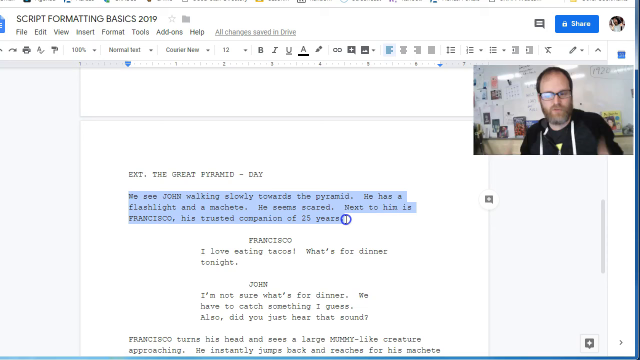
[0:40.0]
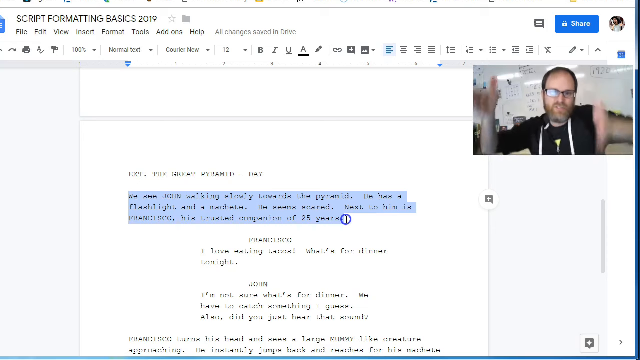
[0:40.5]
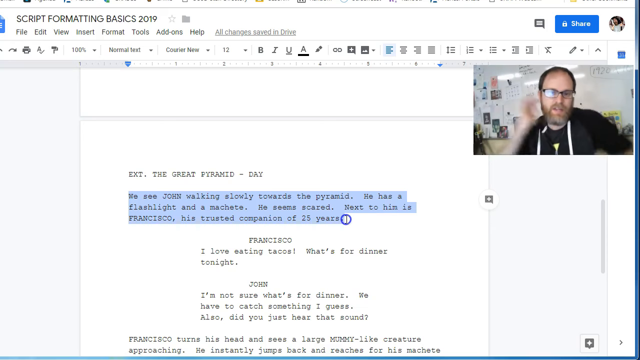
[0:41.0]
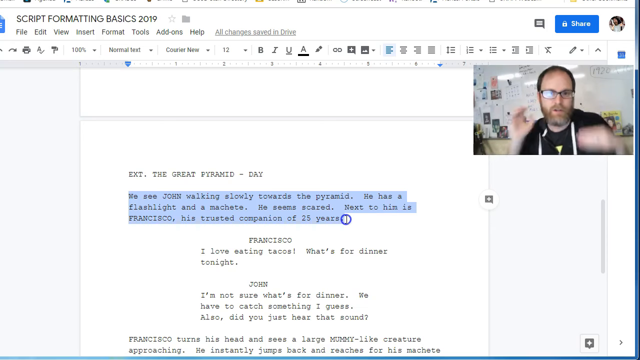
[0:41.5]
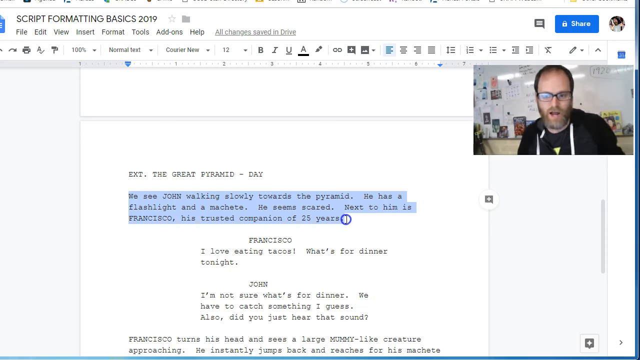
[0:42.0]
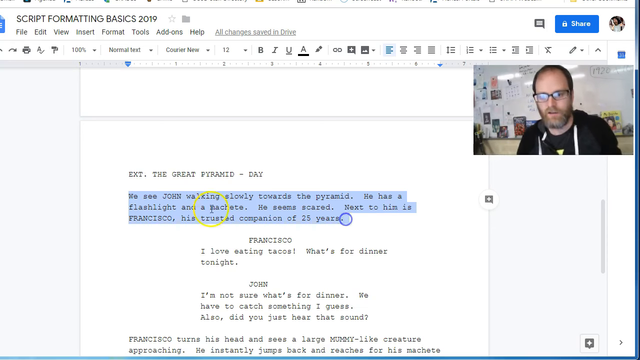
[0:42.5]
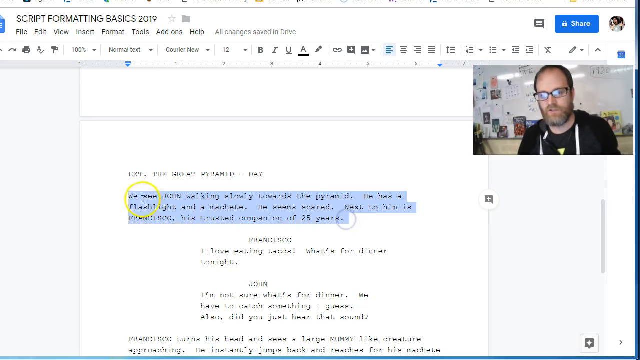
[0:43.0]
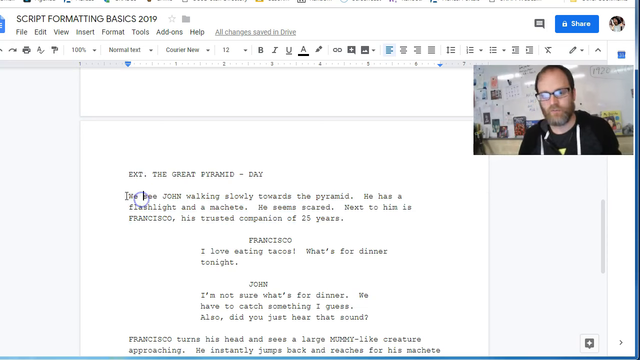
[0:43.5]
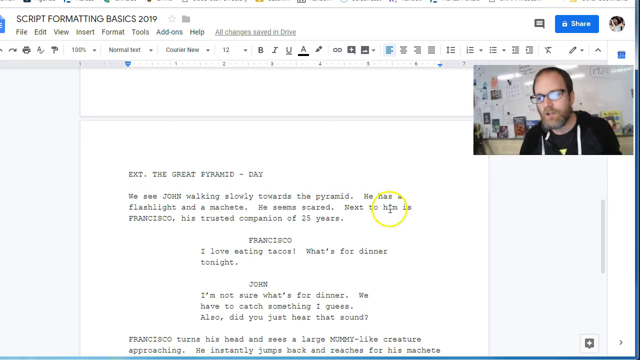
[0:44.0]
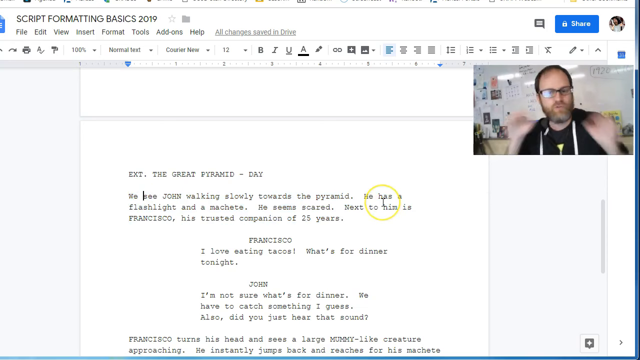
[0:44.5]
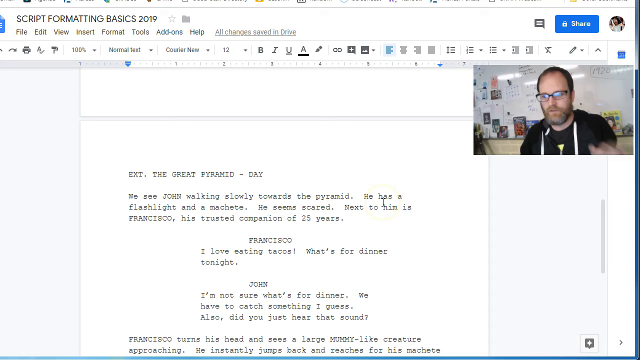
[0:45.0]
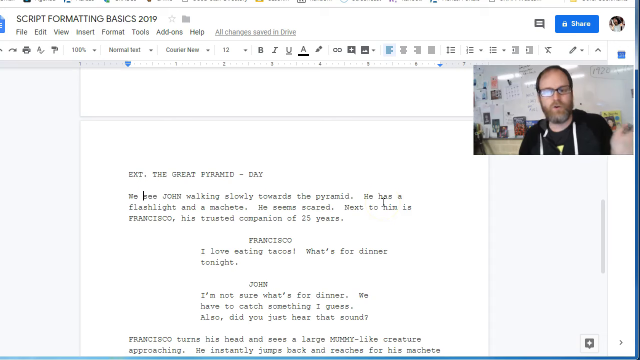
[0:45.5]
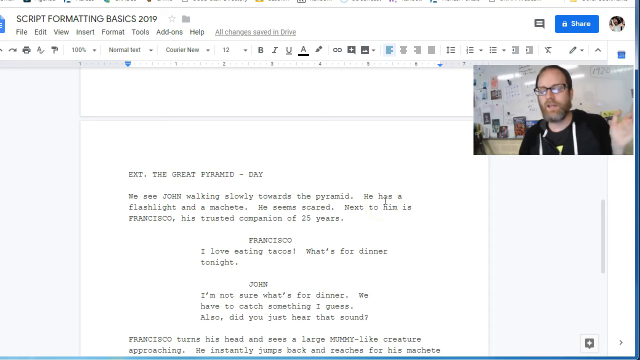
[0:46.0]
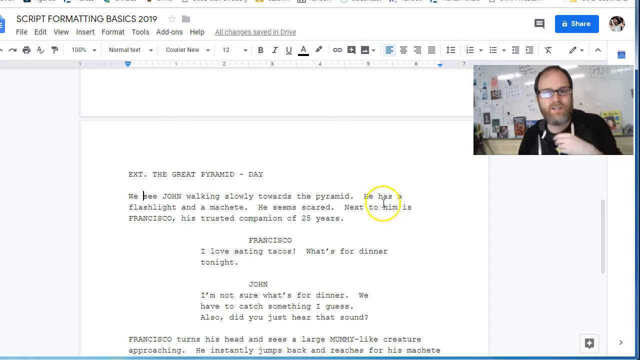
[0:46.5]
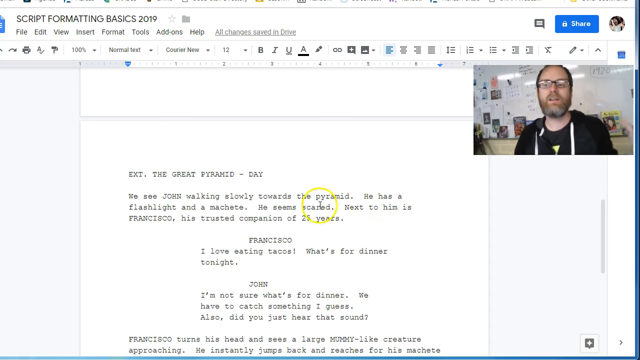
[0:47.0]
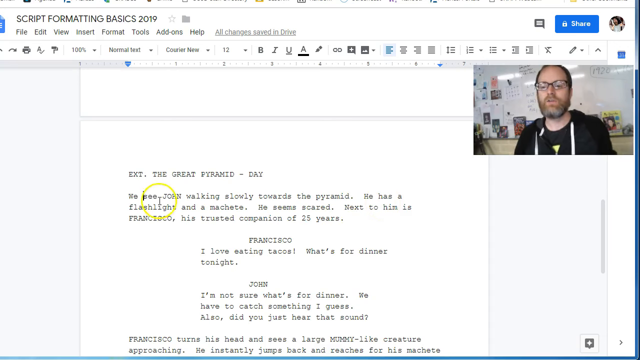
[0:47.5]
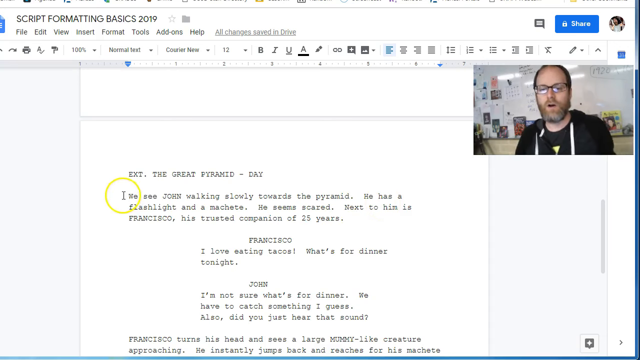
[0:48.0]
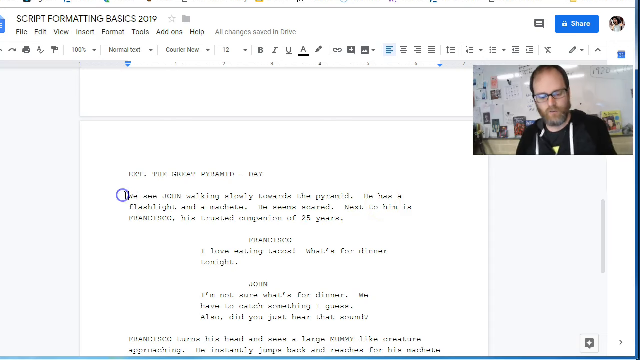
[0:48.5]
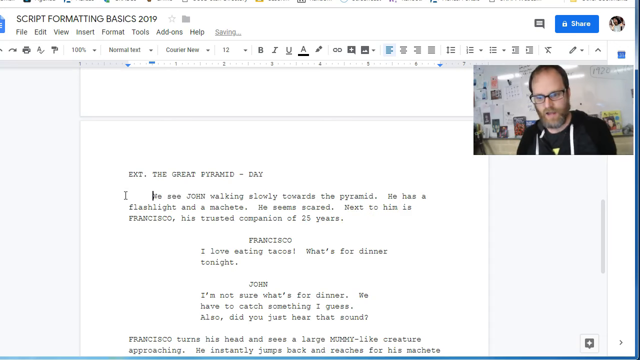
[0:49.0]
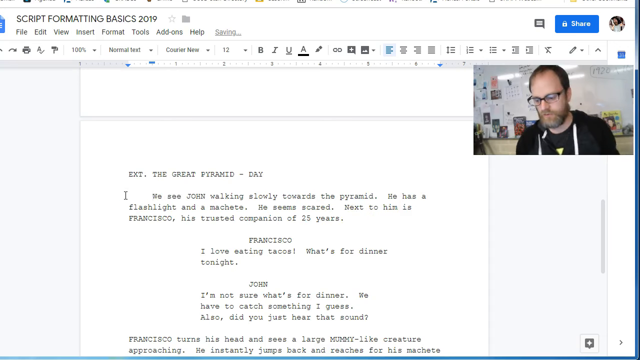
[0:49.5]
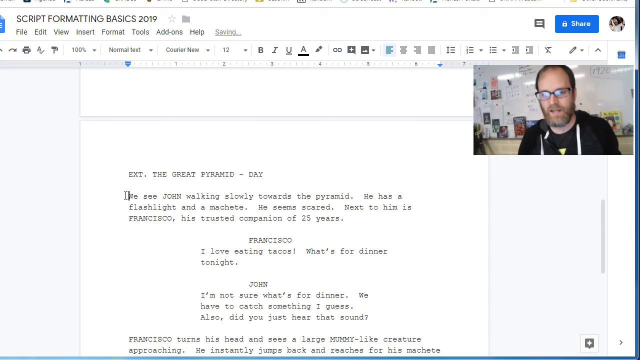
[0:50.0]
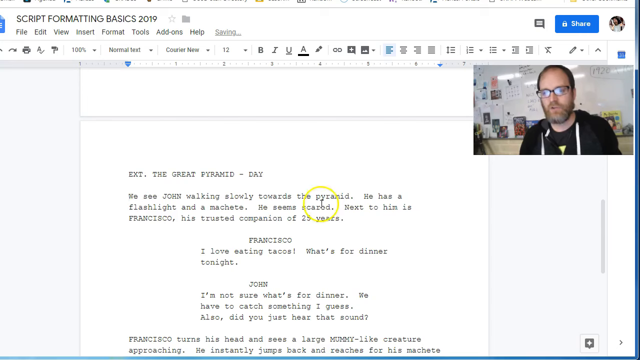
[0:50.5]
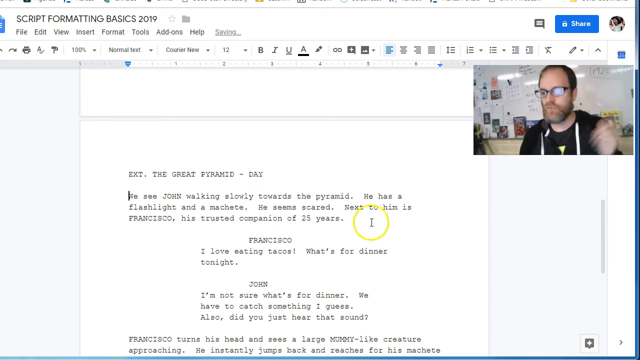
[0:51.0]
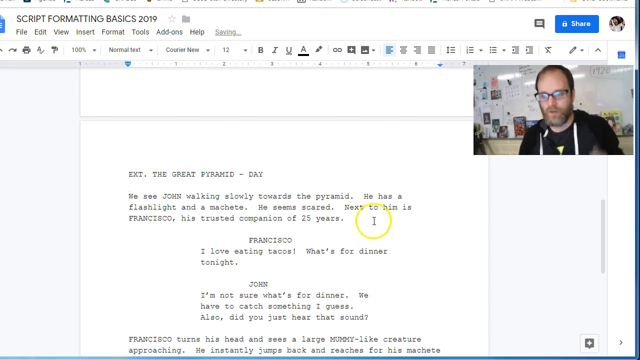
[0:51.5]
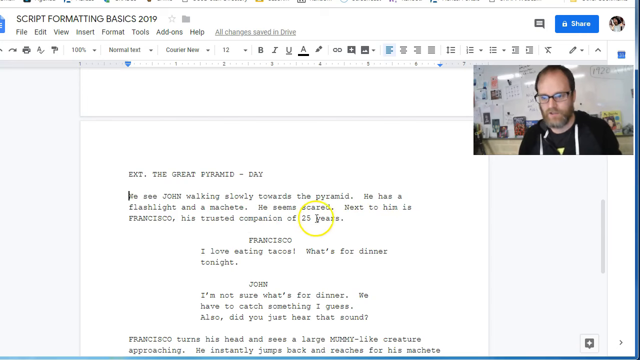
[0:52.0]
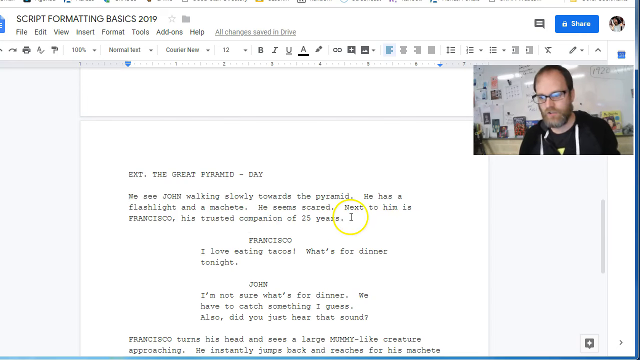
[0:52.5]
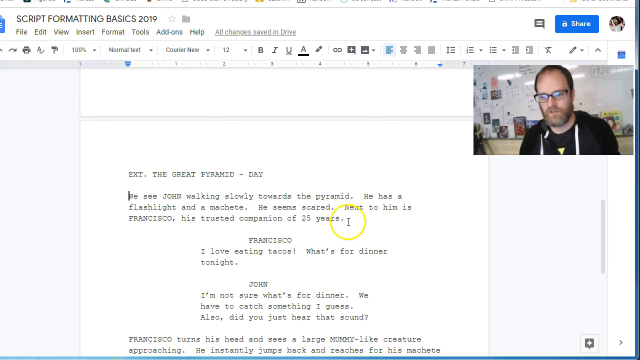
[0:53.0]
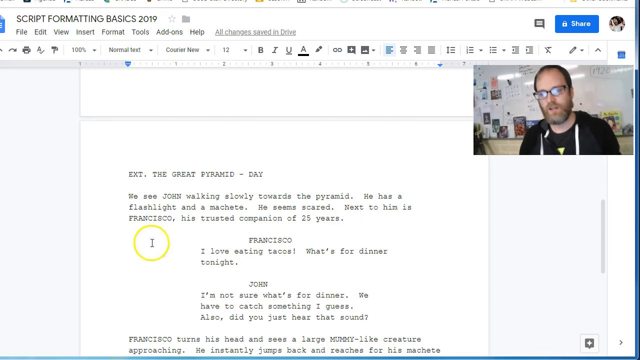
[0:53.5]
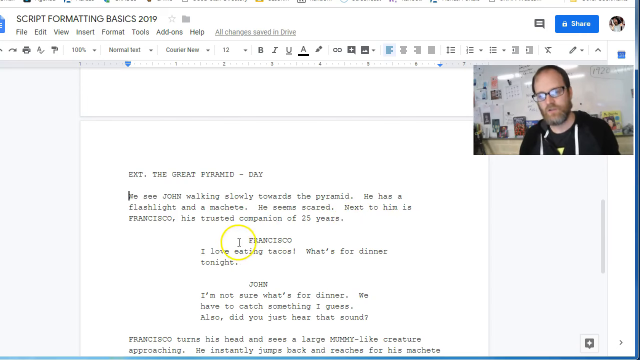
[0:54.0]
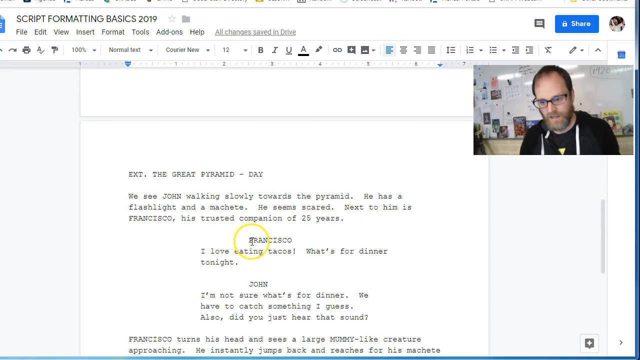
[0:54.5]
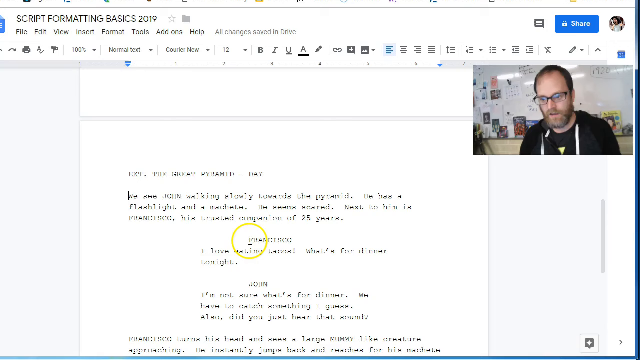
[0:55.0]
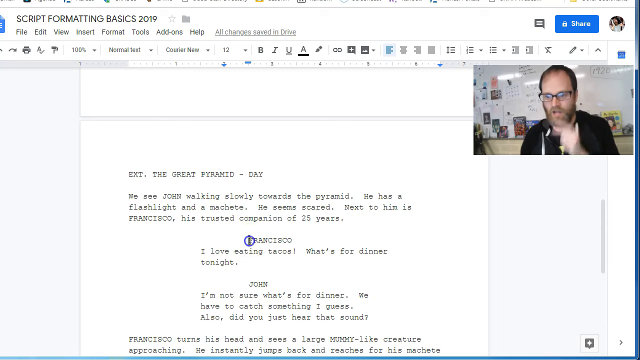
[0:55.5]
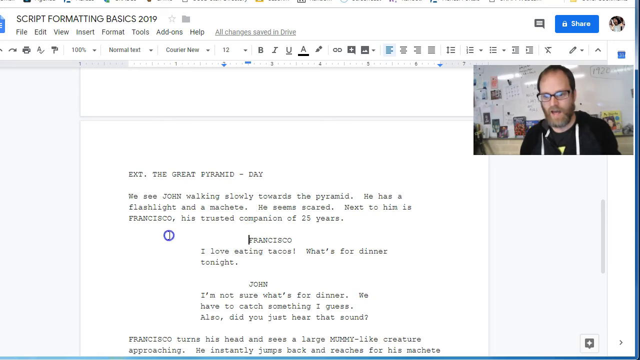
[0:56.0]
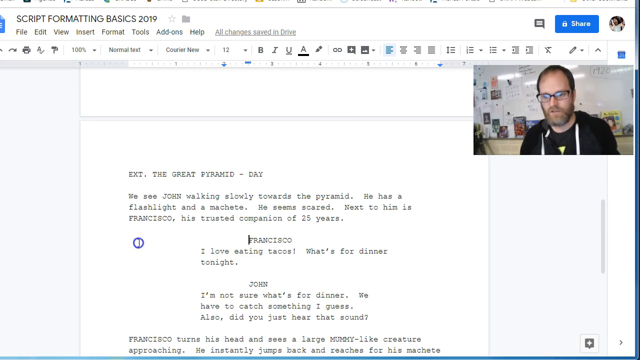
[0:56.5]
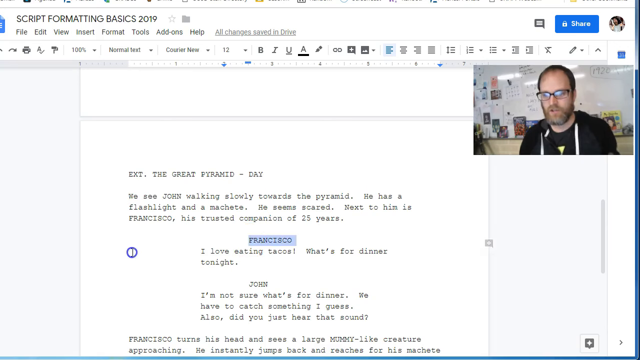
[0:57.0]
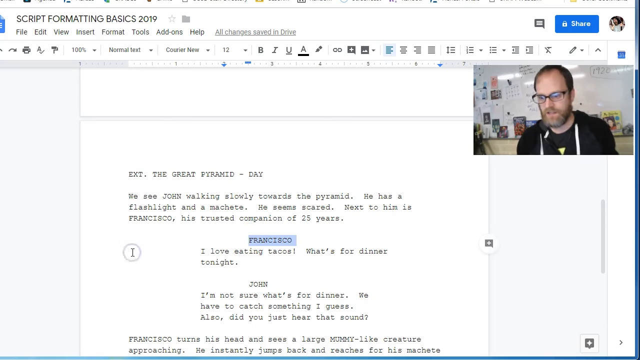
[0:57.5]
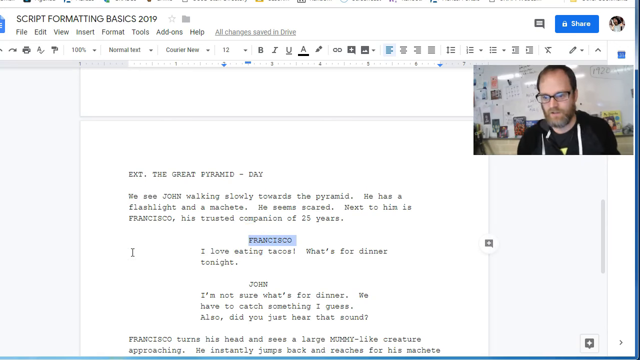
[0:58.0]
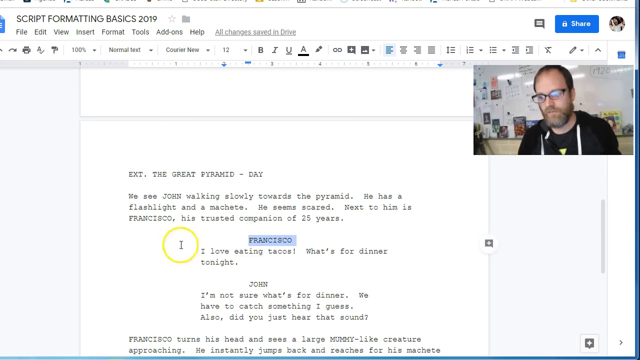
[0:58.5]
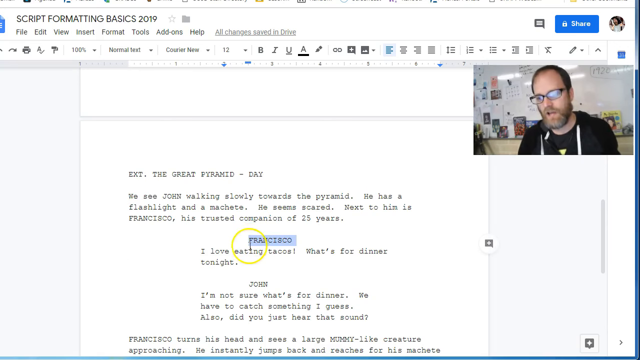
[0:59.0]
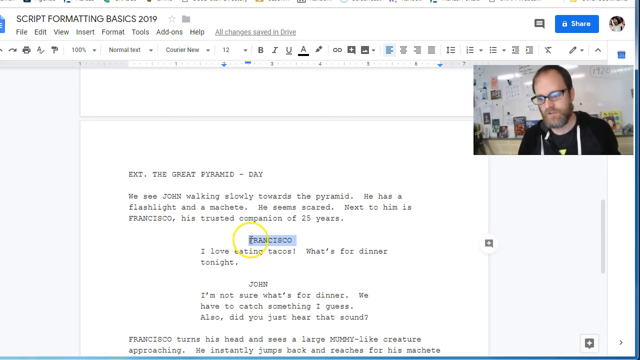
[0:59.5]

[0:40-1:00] The man puts his hands above his head, keeping them upright, then scratches his head. He holds his left hand crooked so the top of his hand is visible, while his right hand looks like a cobra about to strike, facing the viewer. He clicks off again. He is very animated, flipping his left wrist. He briefly indents the block that reads "we see John", then moves down to "Francisco", clicks at the front of it and highlights it, turning it blue; at that moment the cursor shows a smaller blue circle around the eye icon instead of the yellow one. He then clicks in front of the F in "Francisco" again. At the top, the left indent option is highlighted, and to the right of Help it reads "all changes saved in Drive".